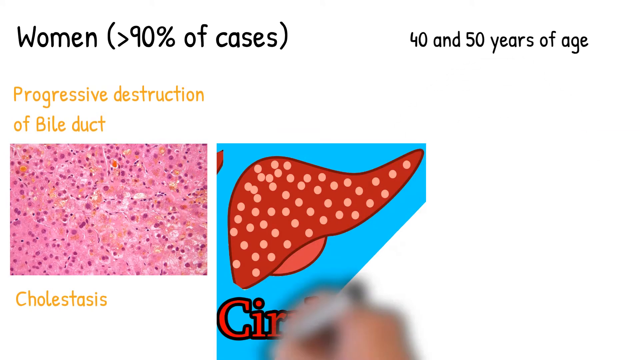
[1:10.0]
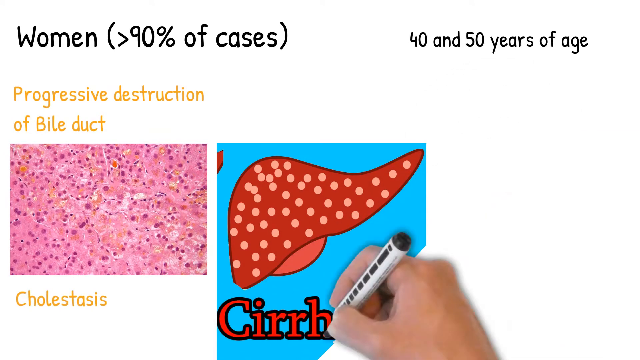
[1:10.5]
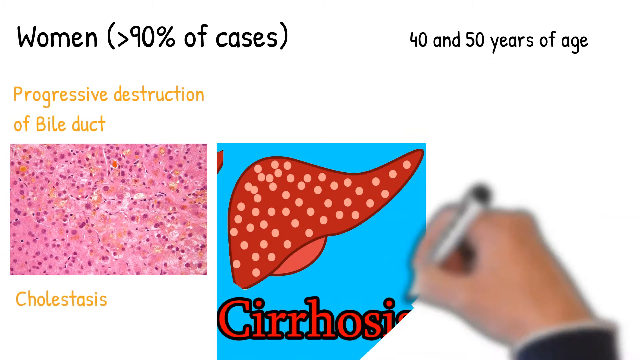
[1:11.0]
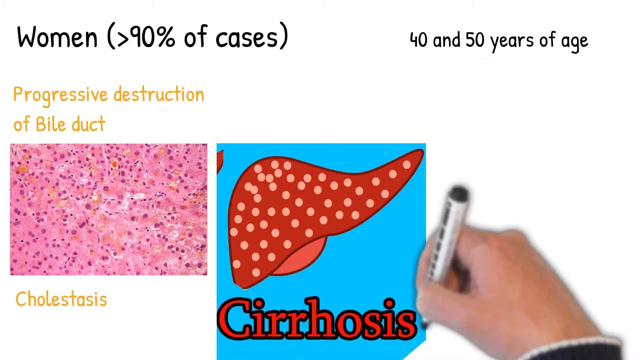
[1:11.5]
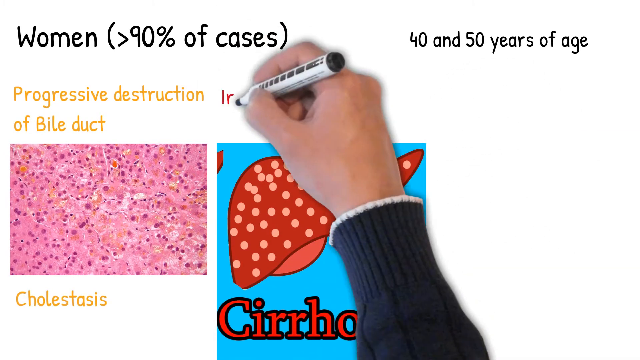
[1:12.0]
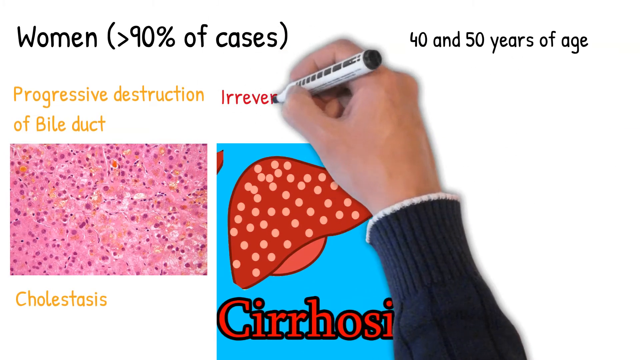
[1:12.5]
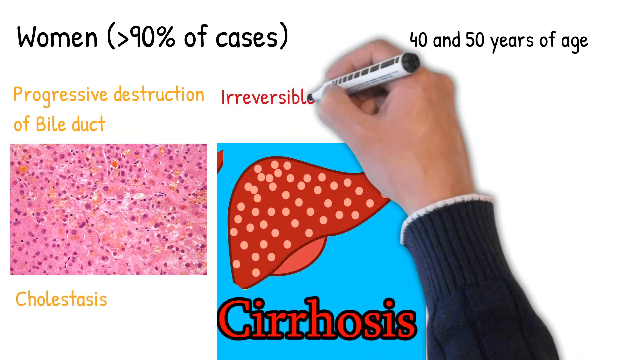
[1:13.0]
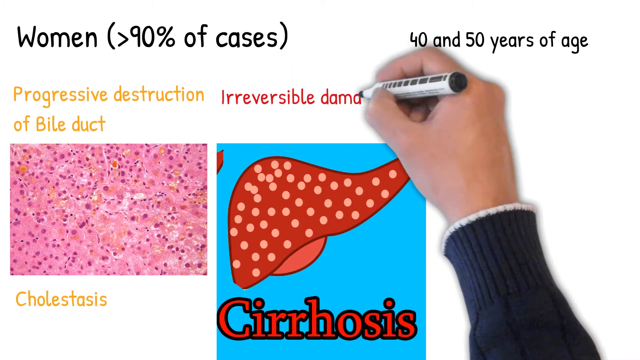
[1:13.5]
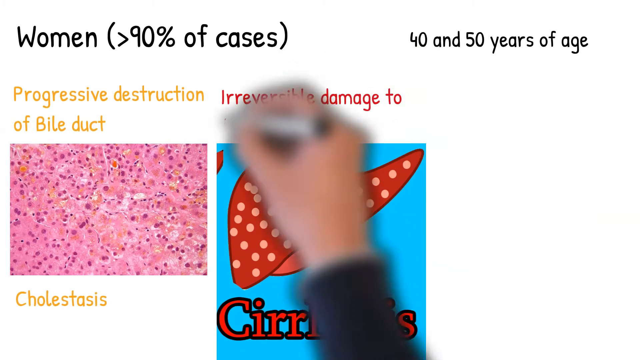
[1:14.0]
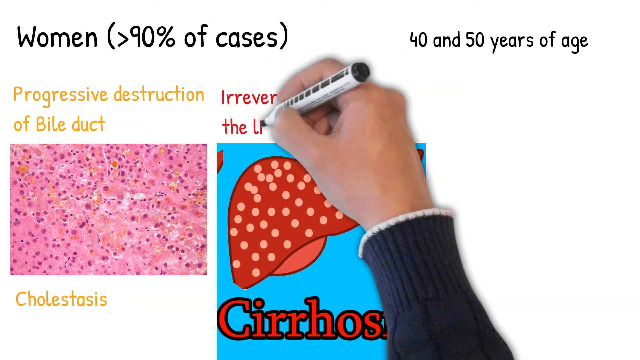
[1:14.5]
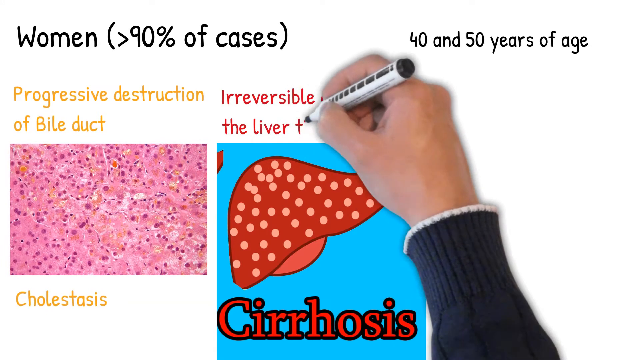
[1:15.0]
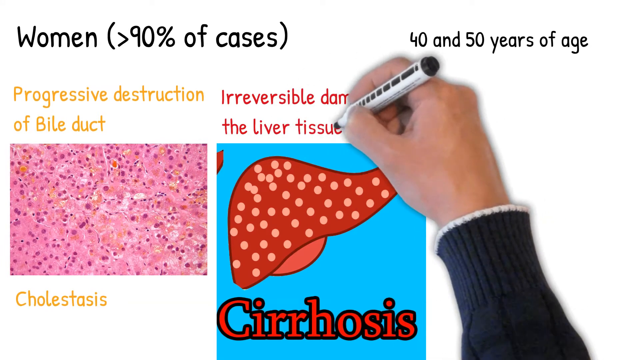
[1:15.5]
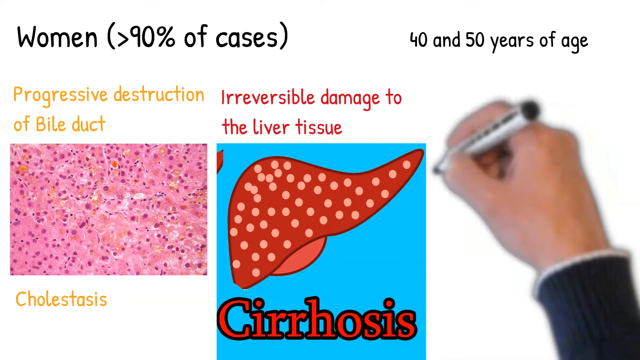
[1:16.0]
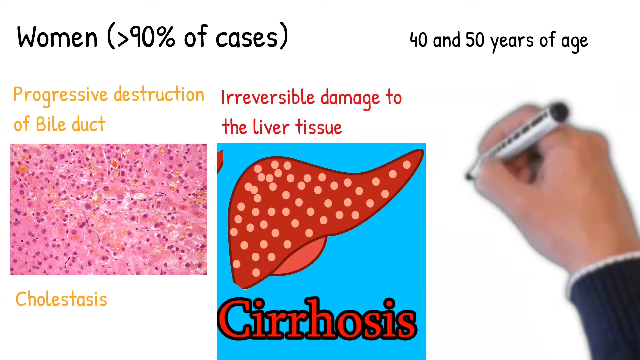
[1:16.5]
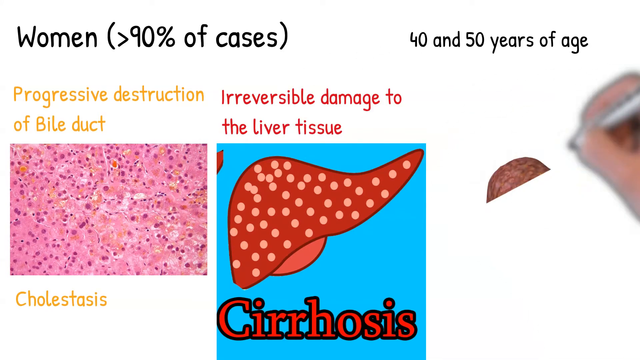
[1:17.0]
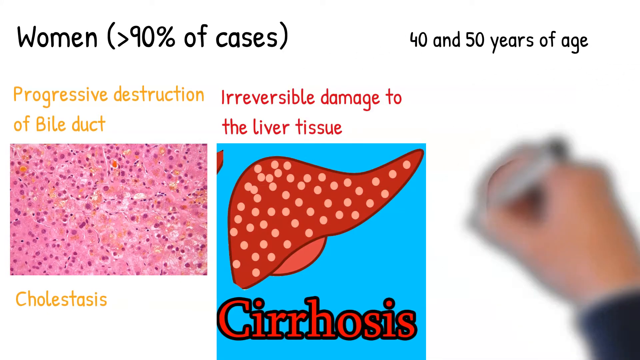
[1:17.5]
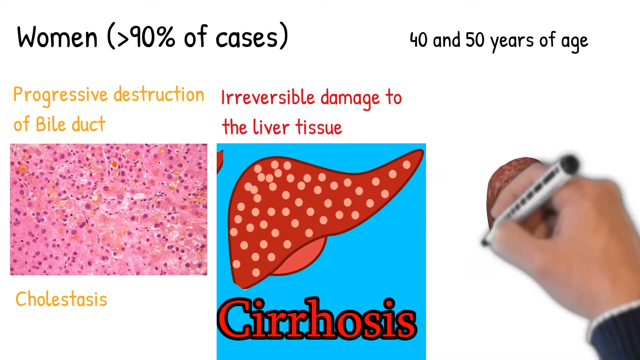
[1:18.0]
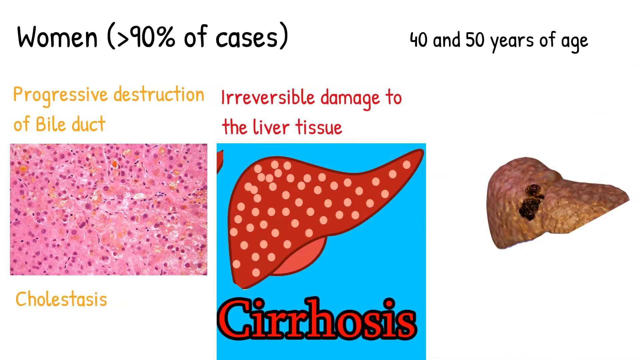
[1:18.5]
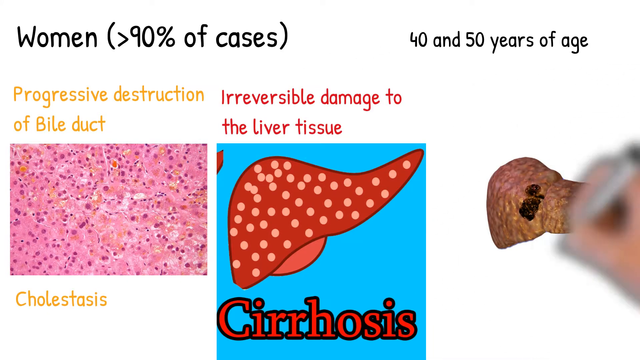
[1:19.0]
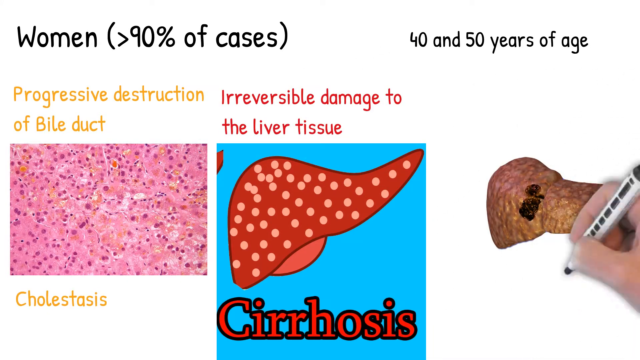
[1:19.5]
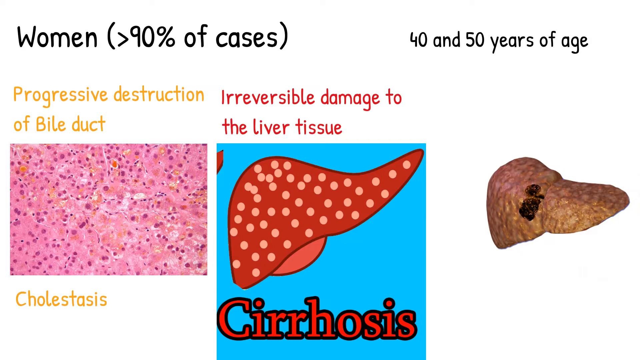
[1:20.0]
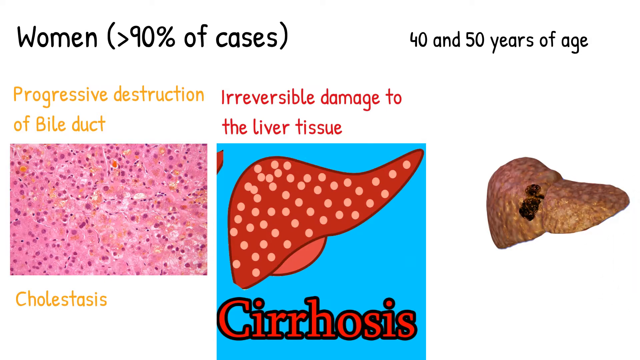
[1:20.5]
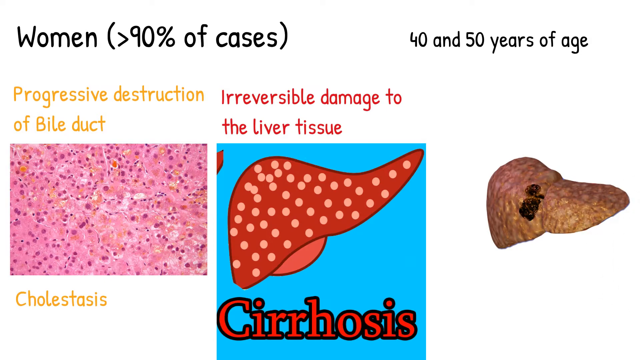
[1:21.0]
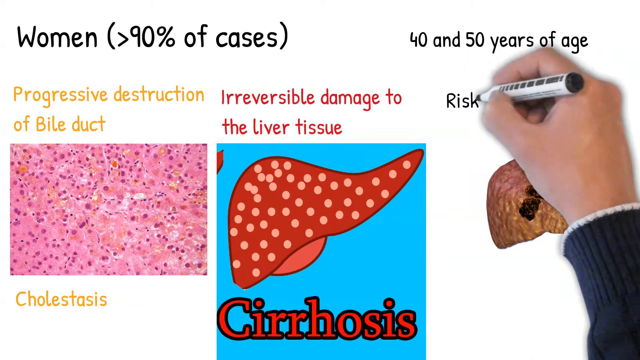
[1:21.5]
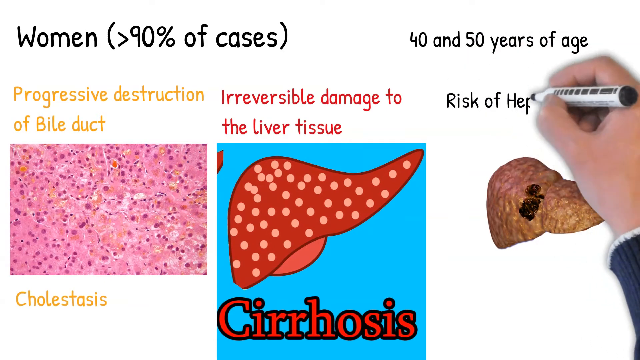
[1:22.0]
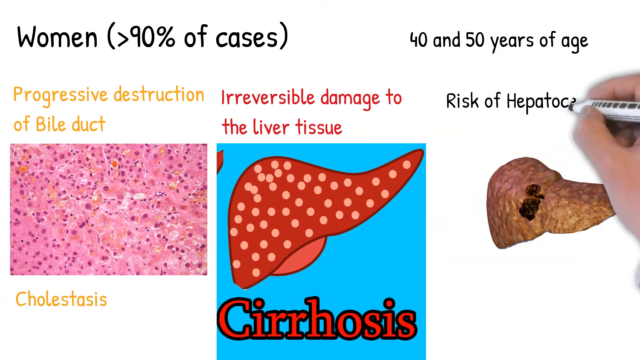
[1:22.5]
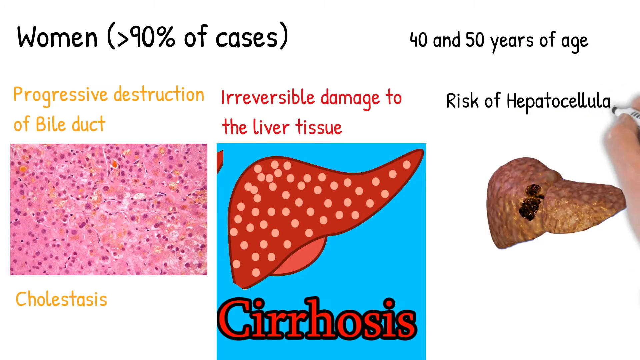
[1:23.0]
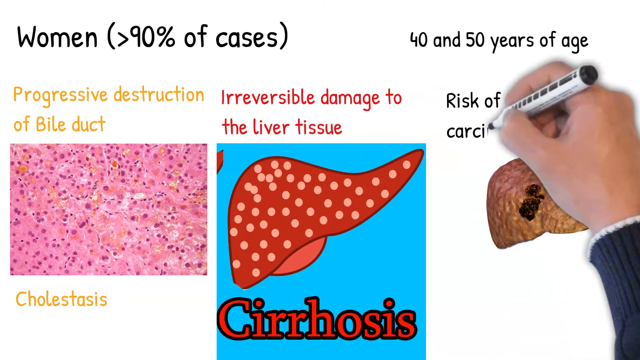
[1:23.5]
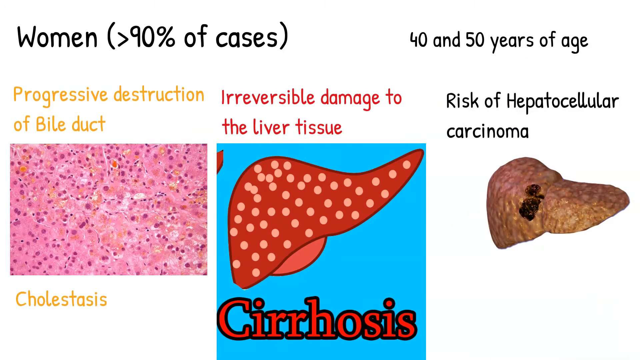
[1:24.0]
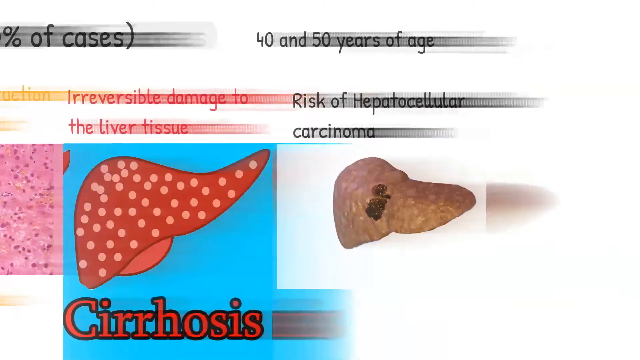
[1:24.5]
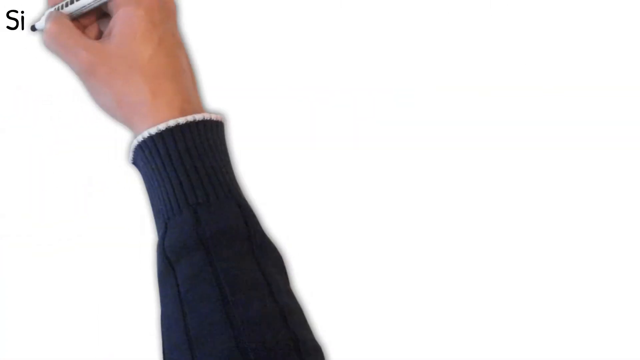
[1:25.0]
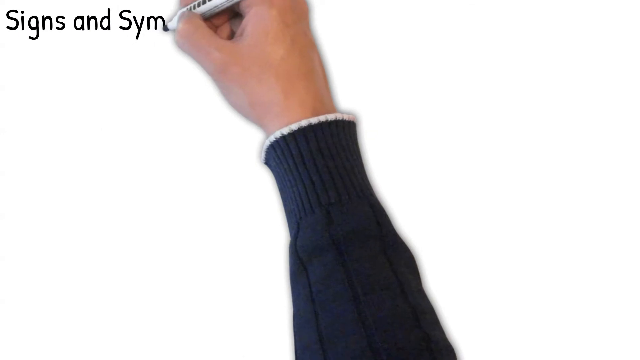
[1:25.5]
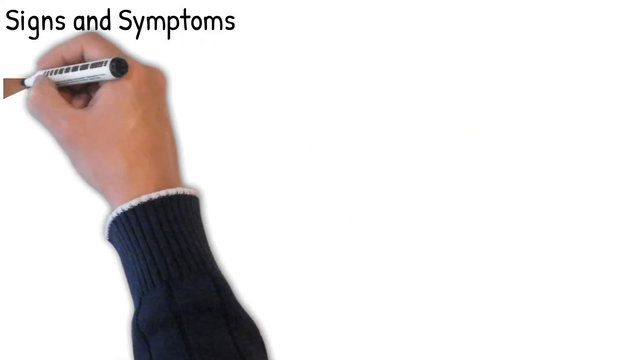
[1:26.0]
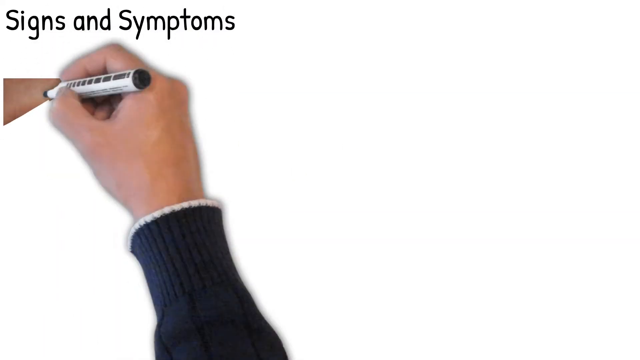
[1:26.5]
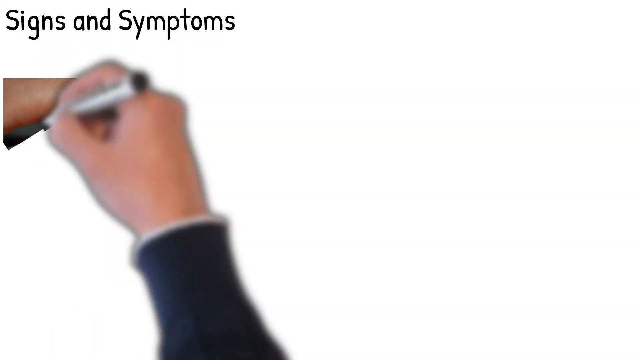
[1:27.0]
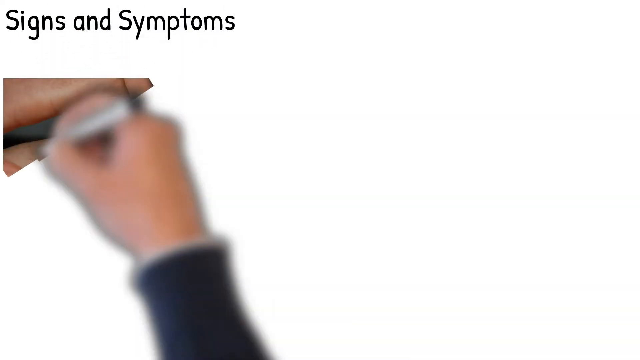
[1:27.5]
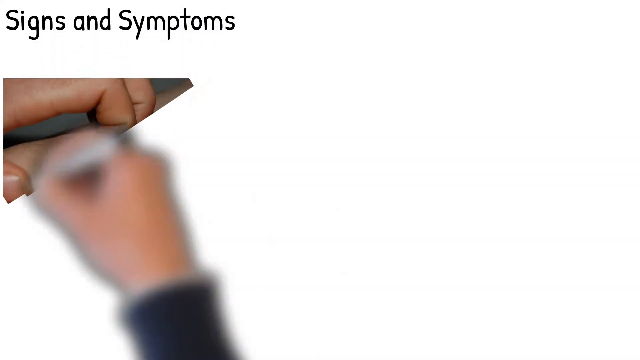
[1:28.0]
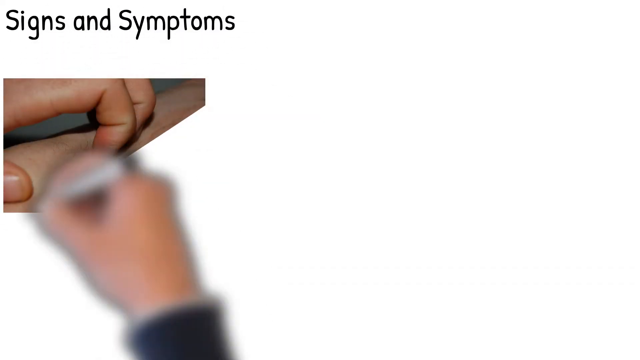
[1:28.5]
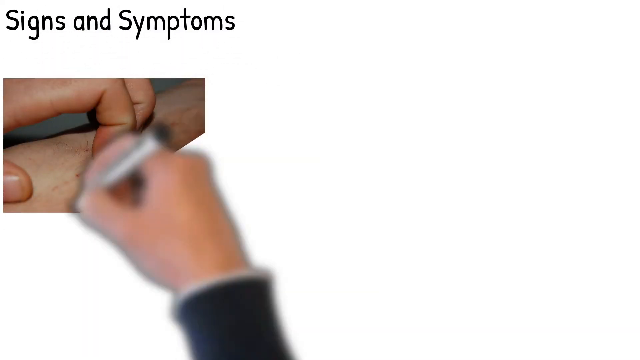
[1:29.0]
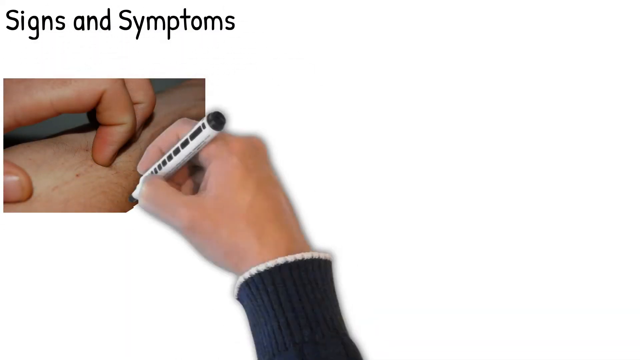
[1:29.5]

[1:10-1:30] The right hand of a Caucasian male draws on a whiteboard background. In the upper left of the image, black text reads "(women, 90% of cases)". Beneath it, mustard yellow text reads "progressive destruction of bile duct". Below that is an image of pink tissue with purple and orange dotting, and beneath it, at the bottom left, "cholestasis". To the right, the hand draws a small blue background with a red liver that has peach dots all through it, with red text beneath reading "cirrhosis". In the upper right corner, text reads "40 and 50 years of age". Above the image, written in red, is "irreversible damage to liver tissue". At the bottom far right, the hand draws a cirrhosed liver that is pink with black spots and looks diseased, with black text reading "risk of hepatocellular carcinoma".